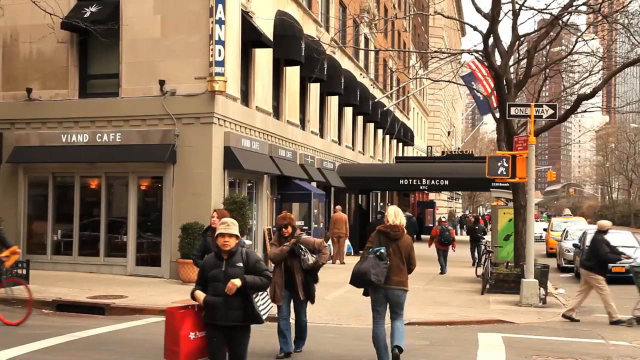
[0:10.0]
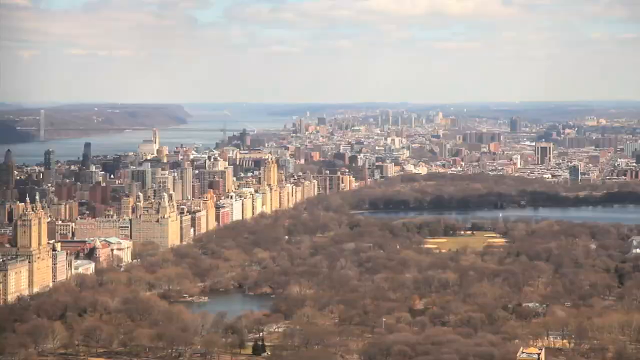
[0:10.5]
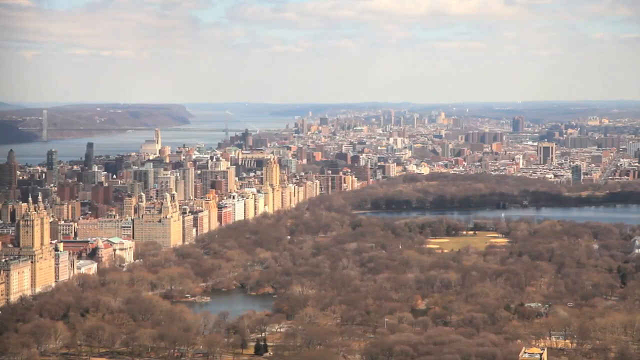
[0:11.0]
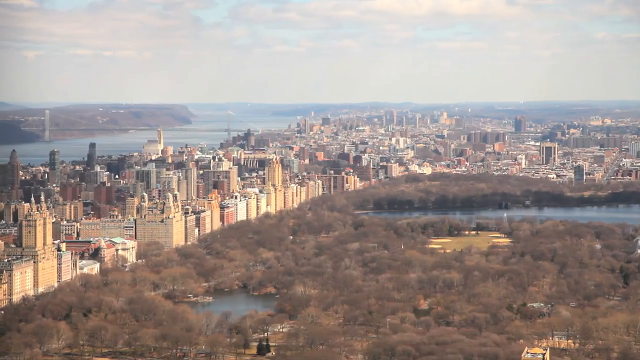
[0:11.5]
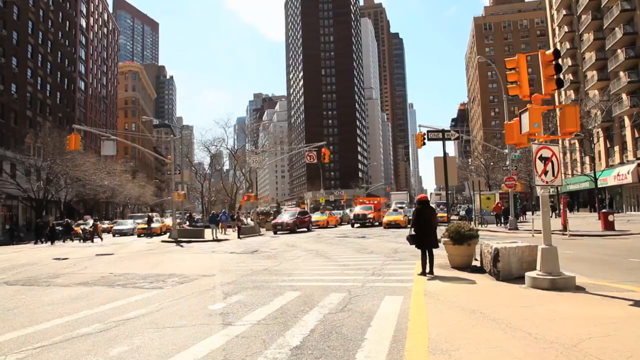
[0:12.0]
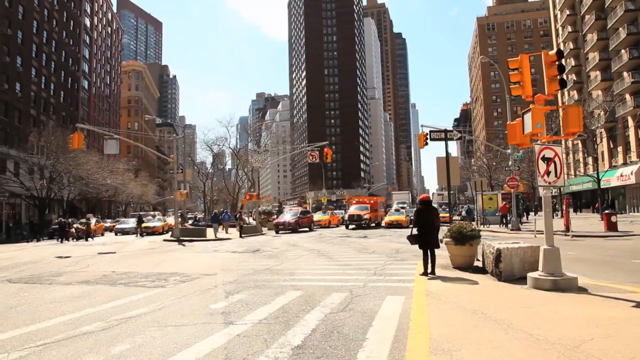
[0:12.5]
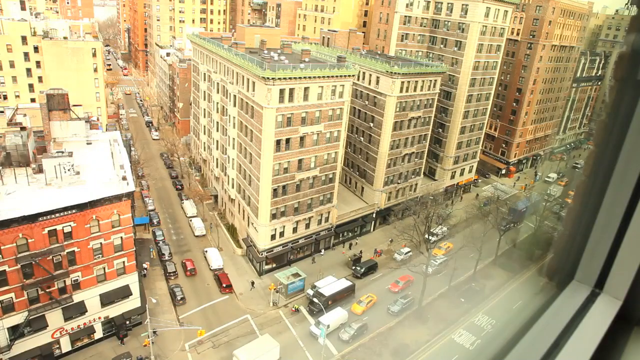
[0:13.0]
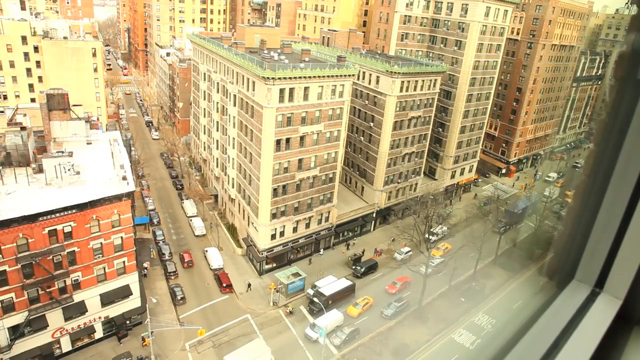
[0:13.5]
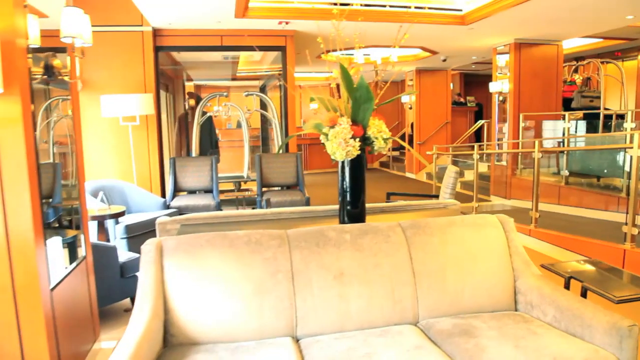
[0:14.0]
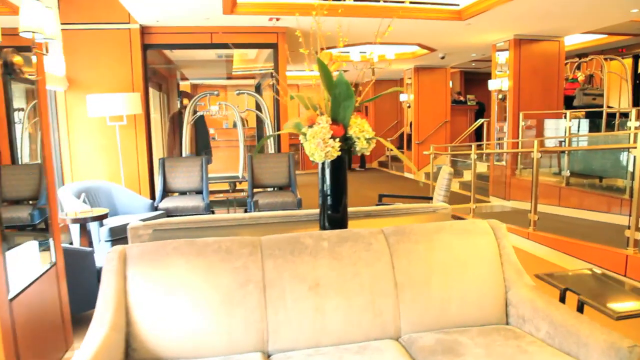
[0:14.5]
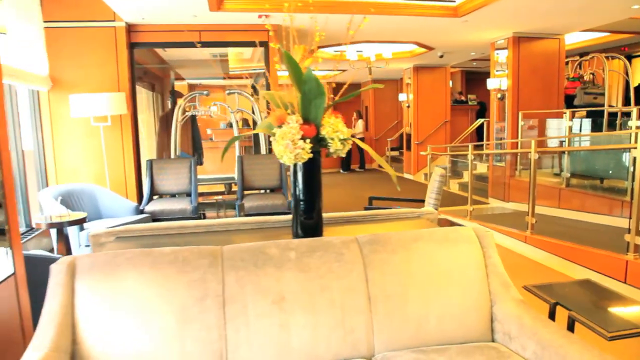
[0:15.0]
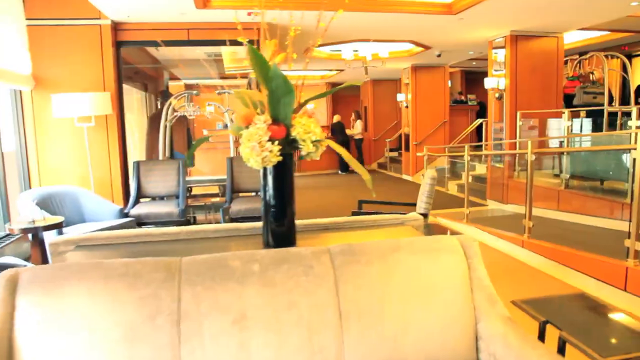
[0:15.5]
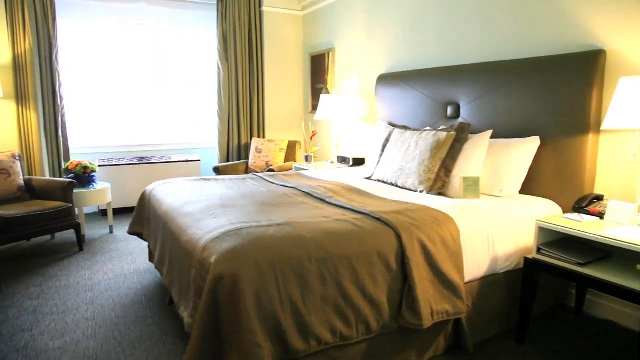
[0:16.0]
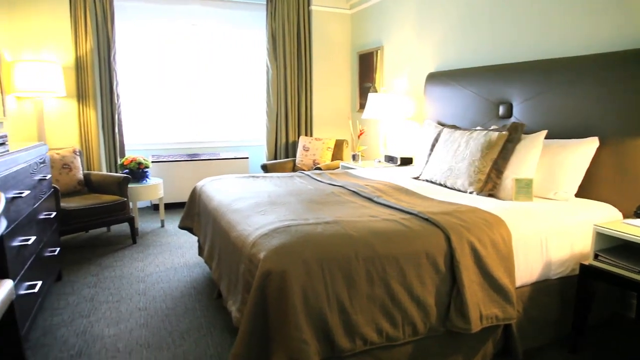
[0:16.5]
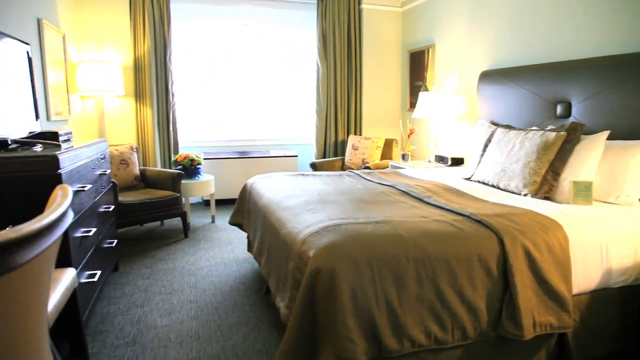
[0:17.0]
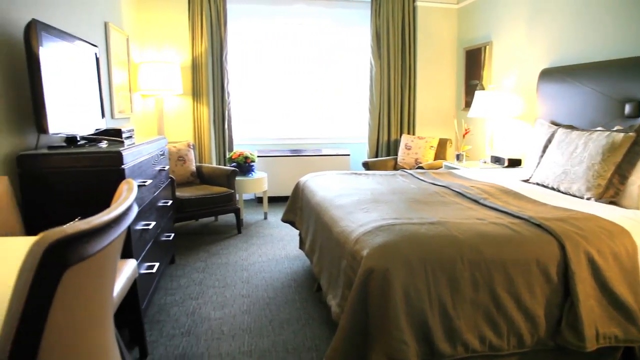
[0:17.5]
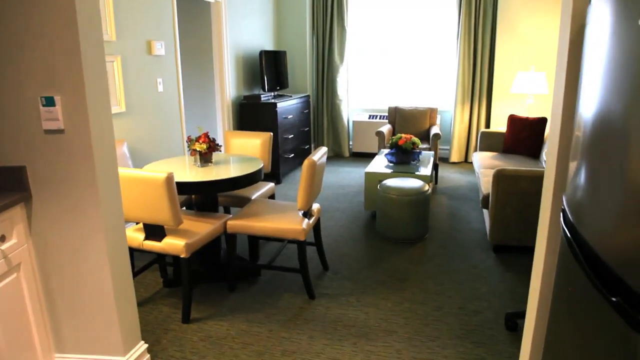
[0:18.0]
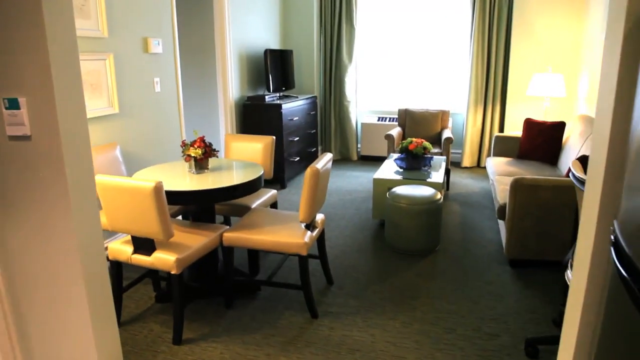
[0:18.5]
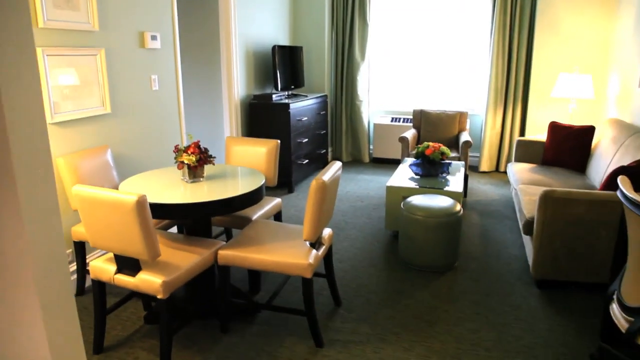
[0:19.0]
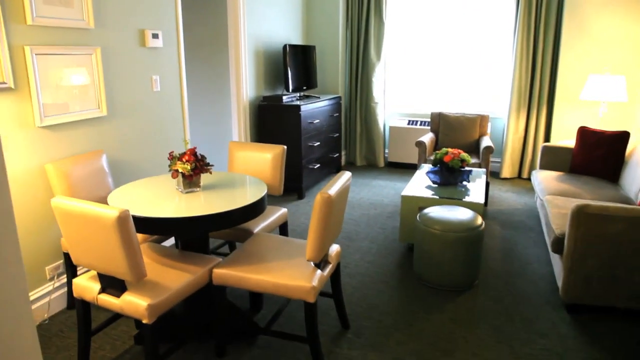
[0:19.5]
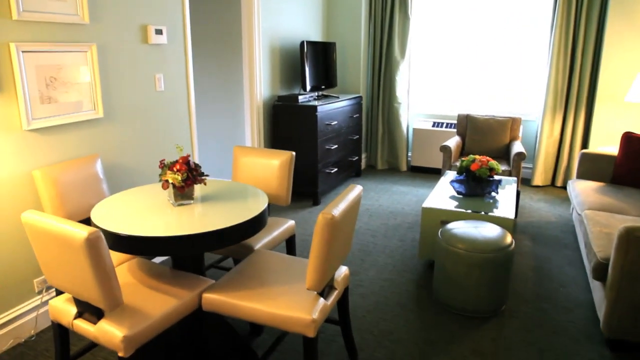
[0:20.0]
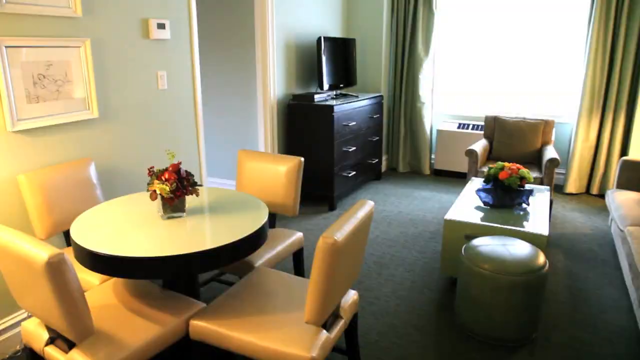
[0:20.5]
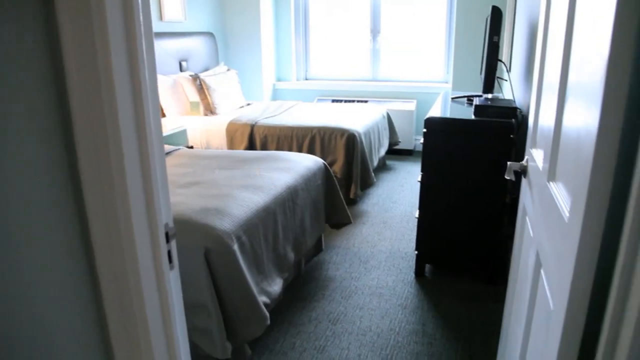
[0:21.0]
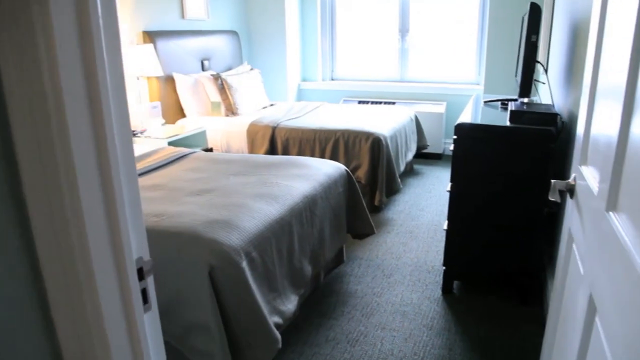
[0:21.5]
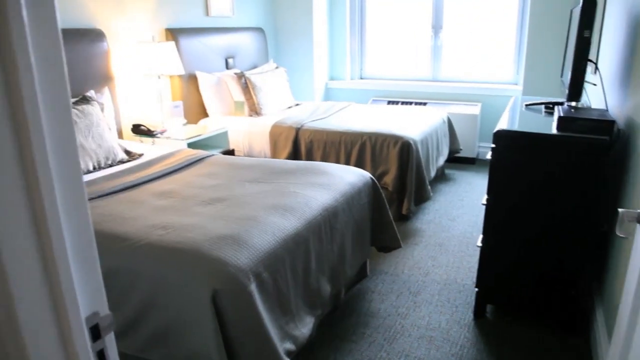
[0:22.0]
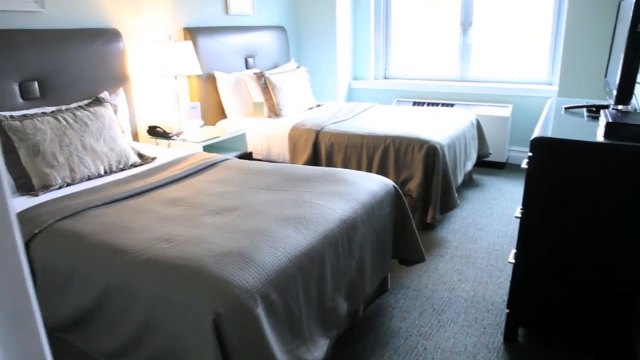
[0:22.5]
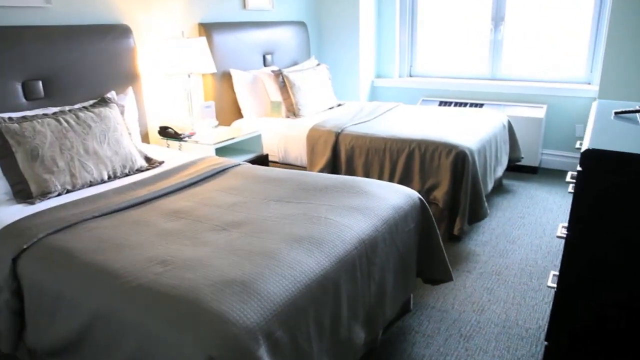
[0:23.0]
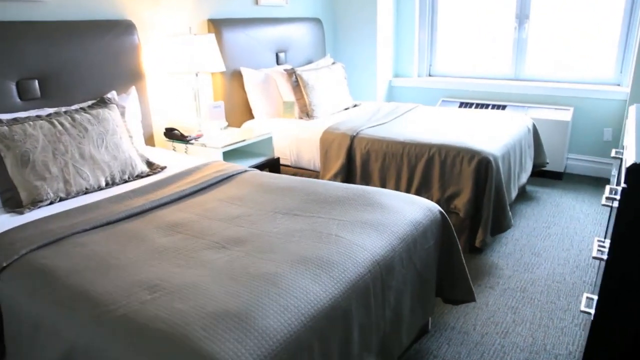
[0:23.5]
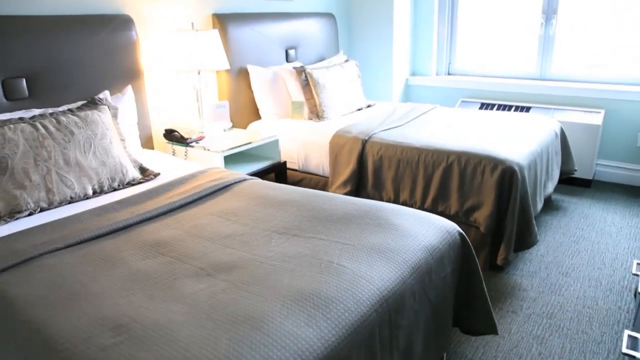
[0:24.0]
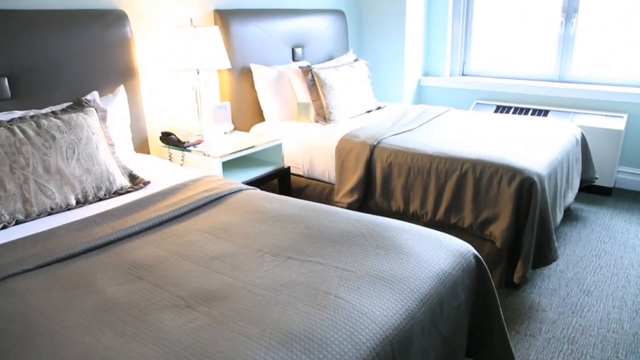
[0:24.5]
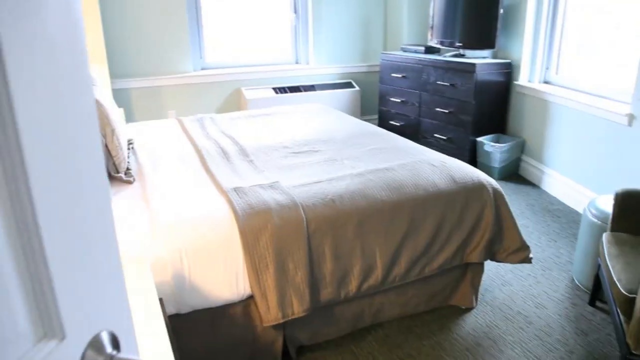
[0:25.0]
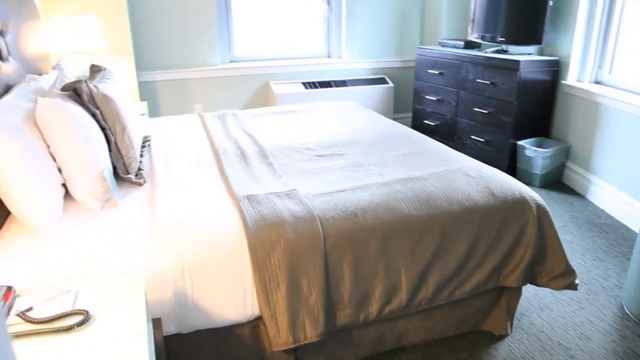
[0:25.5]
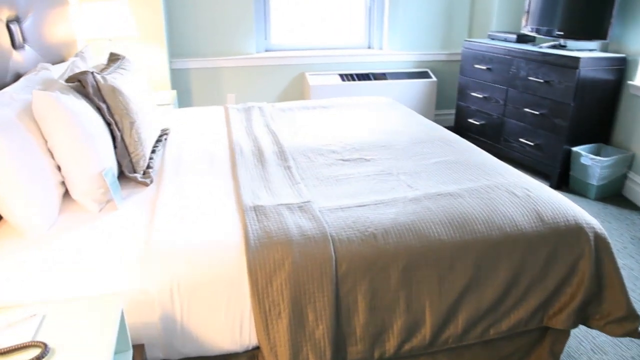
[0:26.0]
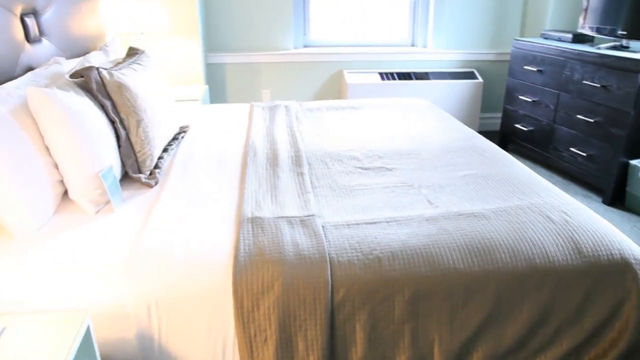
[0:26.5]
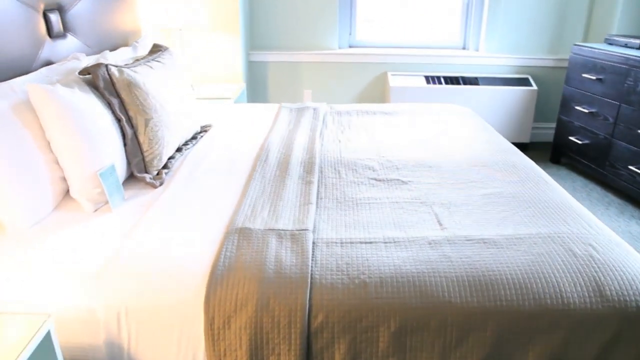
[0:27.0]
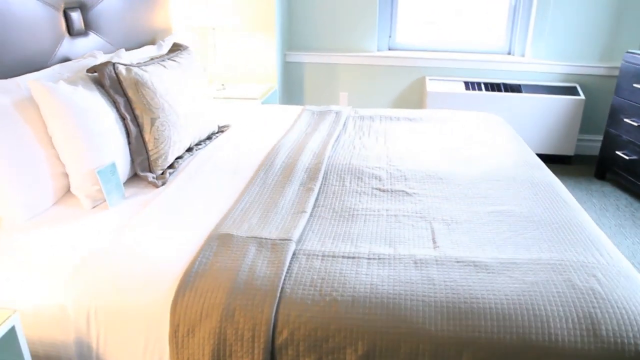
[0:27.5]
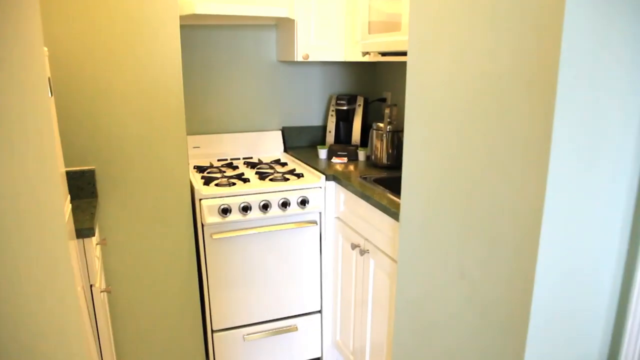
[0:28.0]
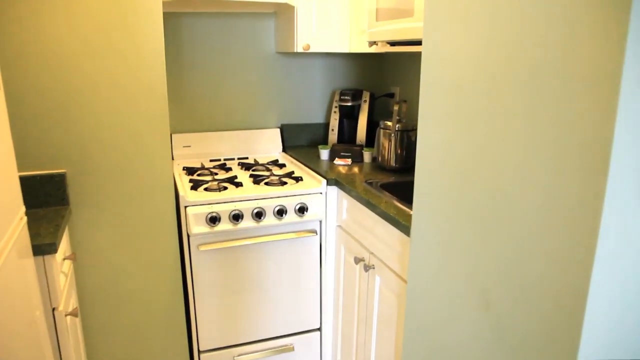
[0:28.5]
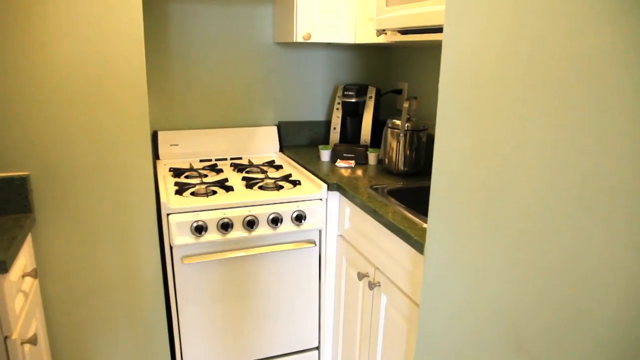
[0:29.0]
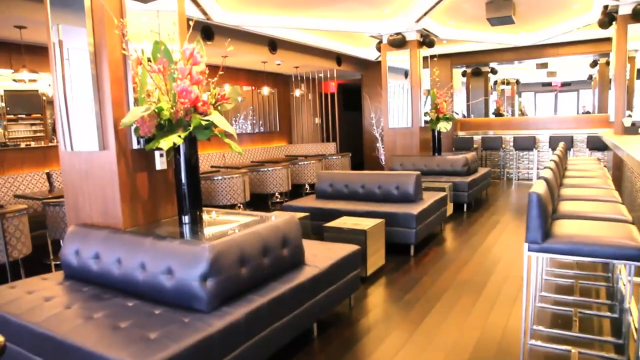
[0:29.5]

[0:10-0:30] People are outside in an urban city center. On the left side of the frame is the Hotel Beacon, a large hotel with the flags of America and New York at the top. Beneath, on the sidewalk to the right, people walk back and forth next to the hotel. An overhead view from far away from New York shows a city on the left and a forest and a river on the lower right. Another view in New York shows cars stopping to let a red ambulance with its lights flashing pass through the street. An overhead shot shows traffic and buildings in New York. An interior shot shows the luxurious inside of the hotel as the camera pans forward. The camera pans left across a luxury hotel room with a bed, chair, dresser and TV. The living area of one of the hotel rooms has a couch, a desk, a dresser and a TV. A bedroom in a hotel room has two beds next to each other, a dresser and a TV. A close-up shows a bed in the hotel room. An oven, a kitchen counter and a coffee machine appear in the hotel room. A luxurious hotel bar is shown.